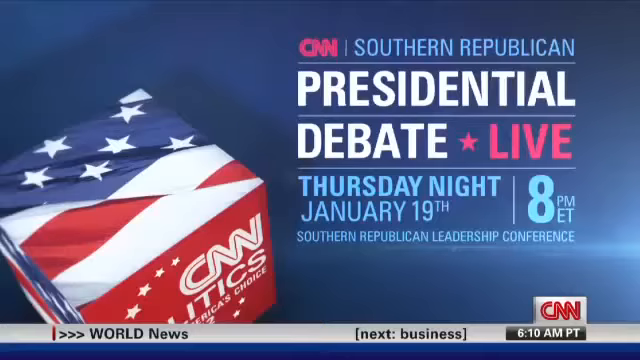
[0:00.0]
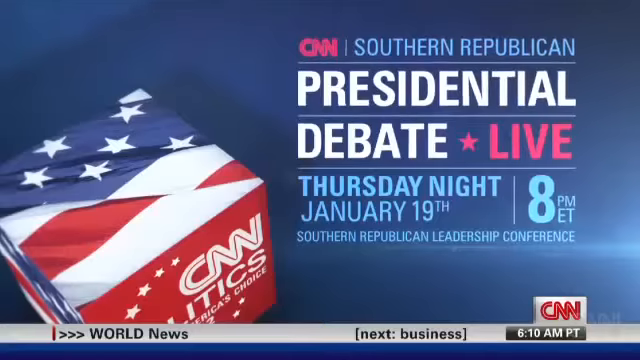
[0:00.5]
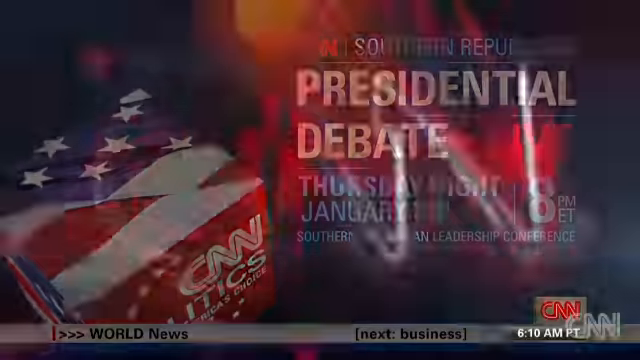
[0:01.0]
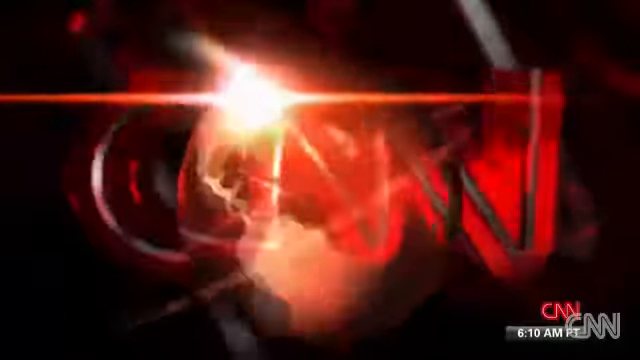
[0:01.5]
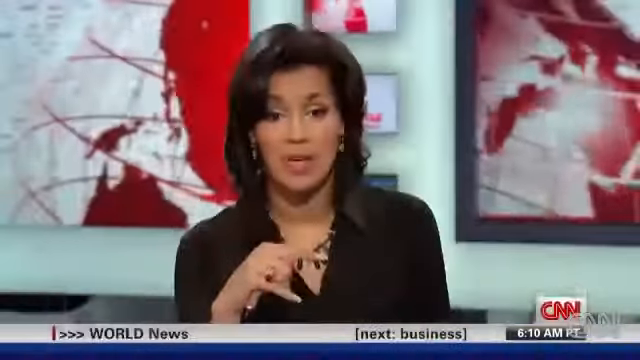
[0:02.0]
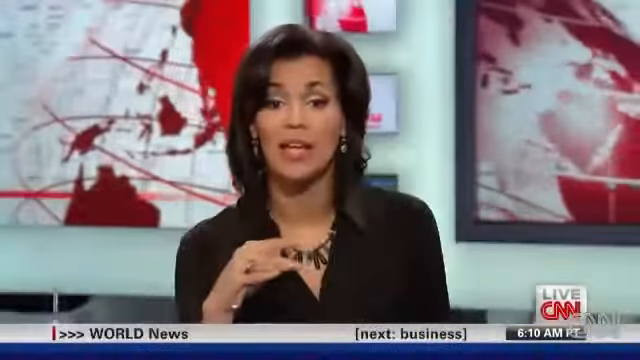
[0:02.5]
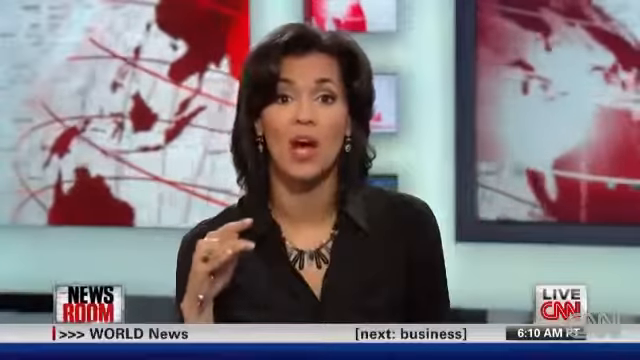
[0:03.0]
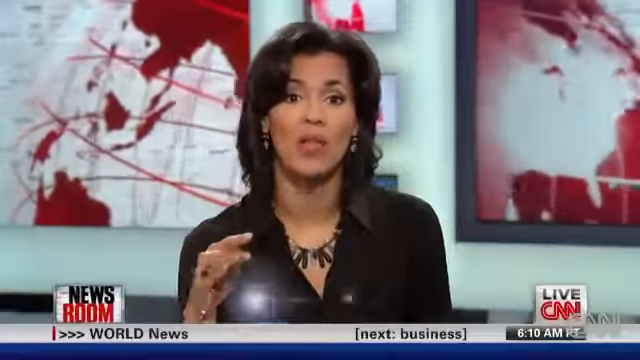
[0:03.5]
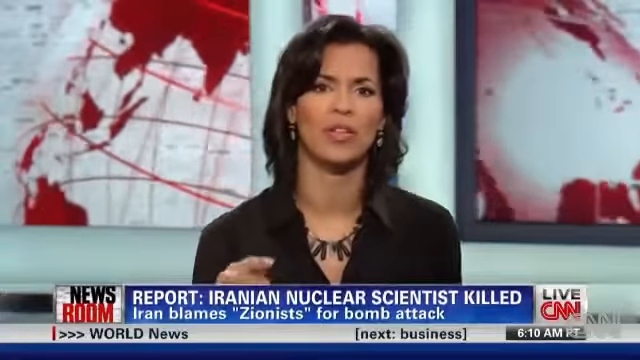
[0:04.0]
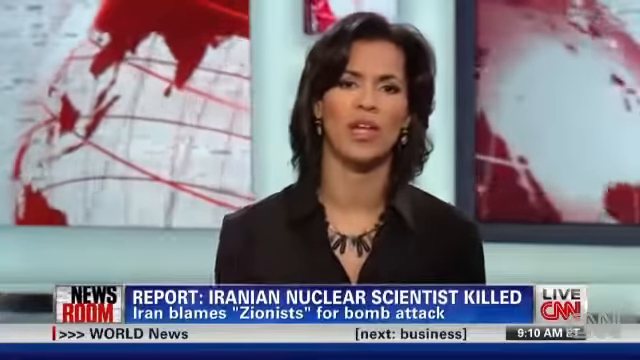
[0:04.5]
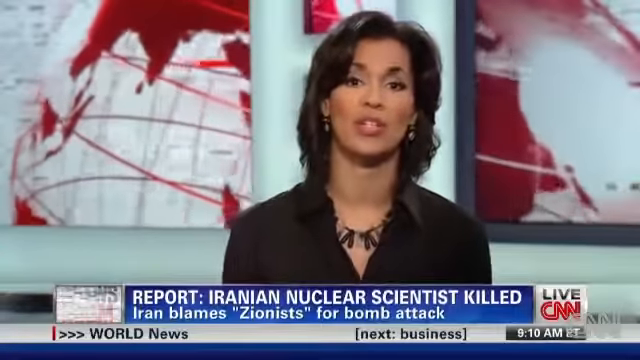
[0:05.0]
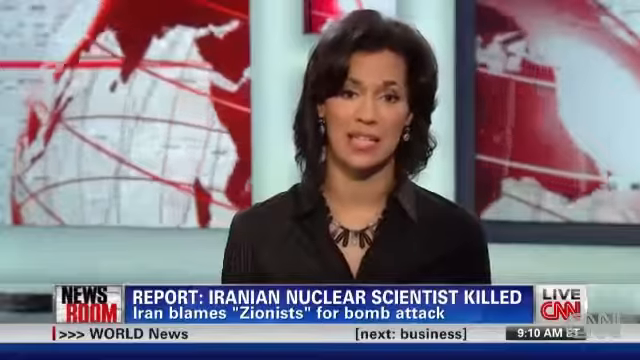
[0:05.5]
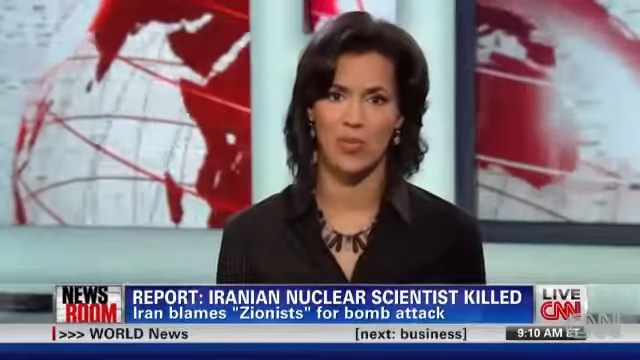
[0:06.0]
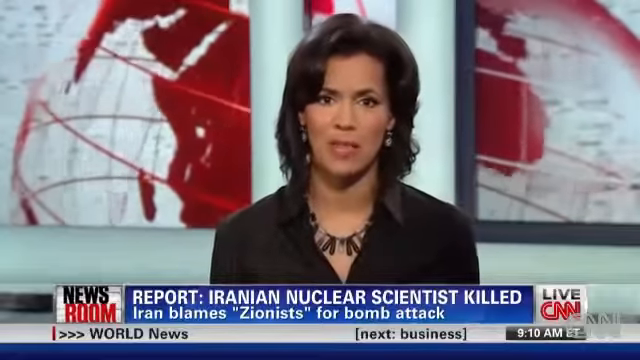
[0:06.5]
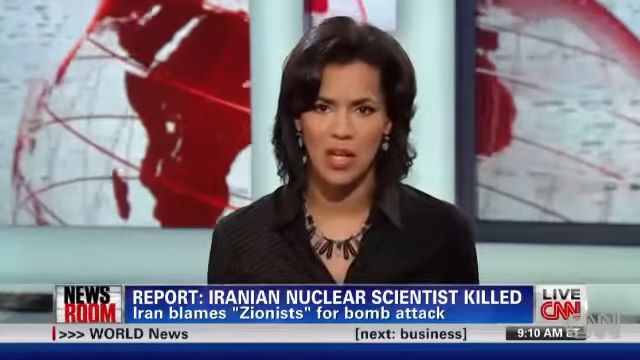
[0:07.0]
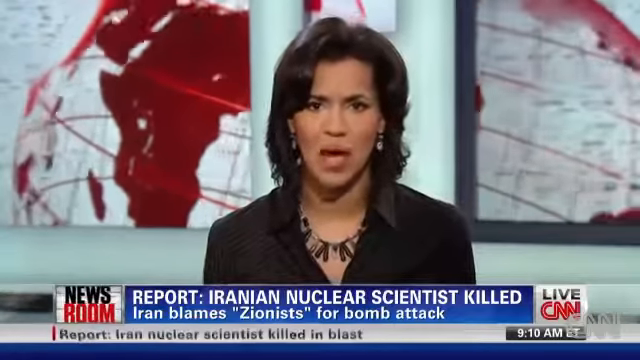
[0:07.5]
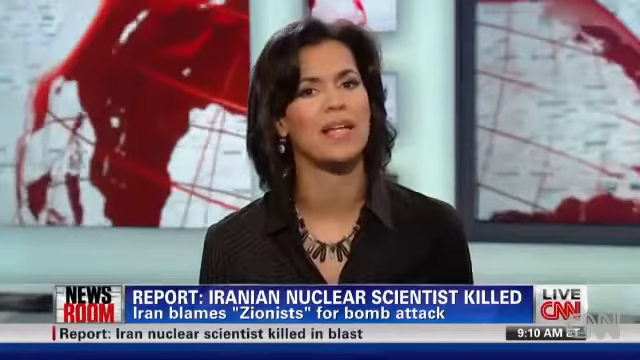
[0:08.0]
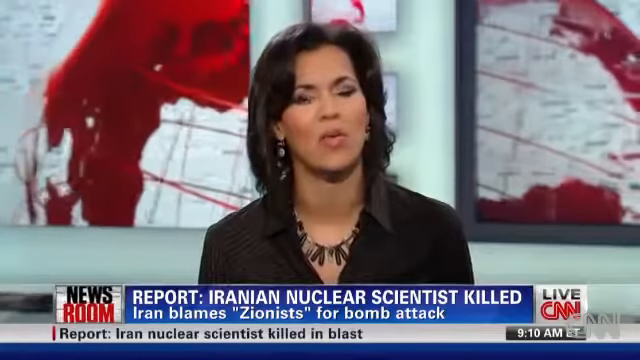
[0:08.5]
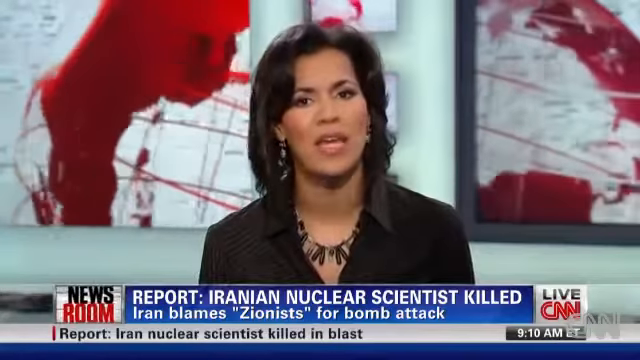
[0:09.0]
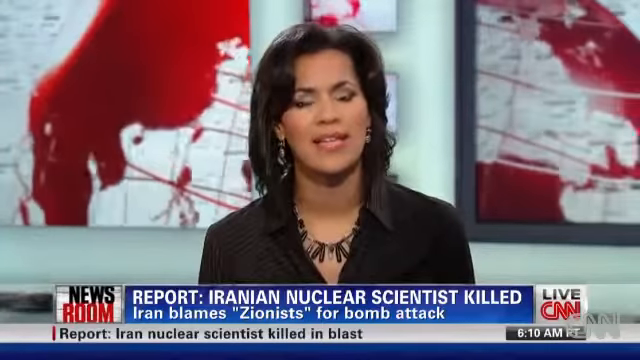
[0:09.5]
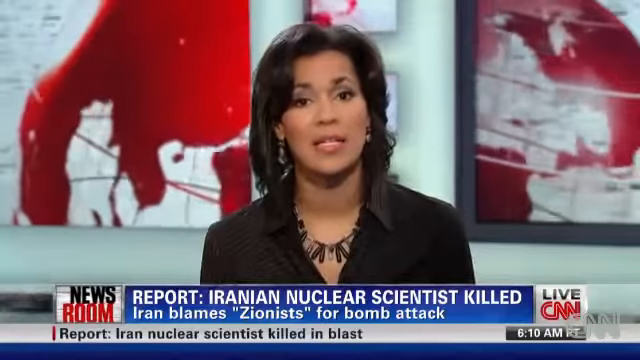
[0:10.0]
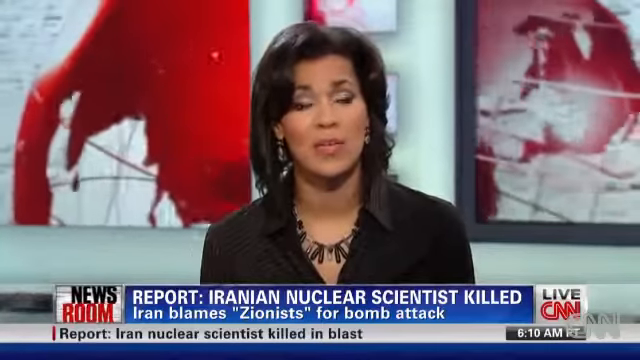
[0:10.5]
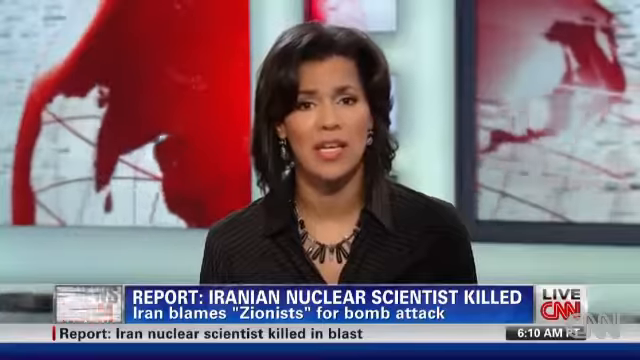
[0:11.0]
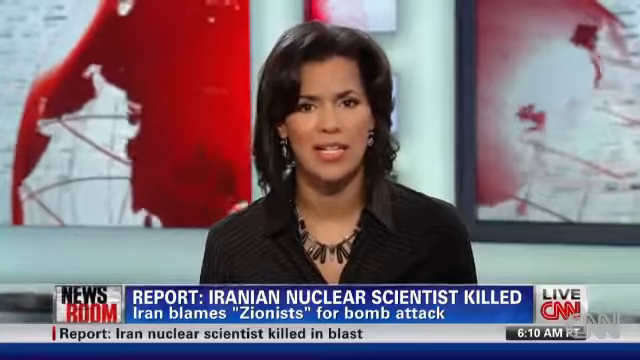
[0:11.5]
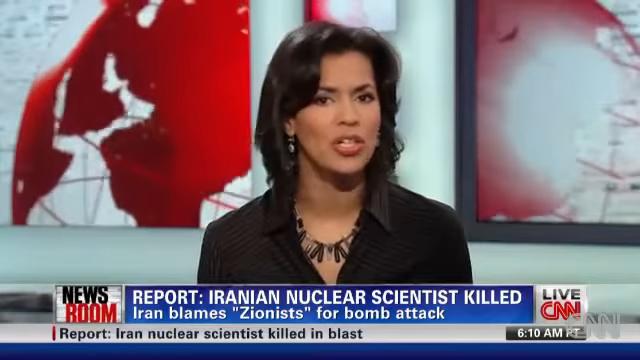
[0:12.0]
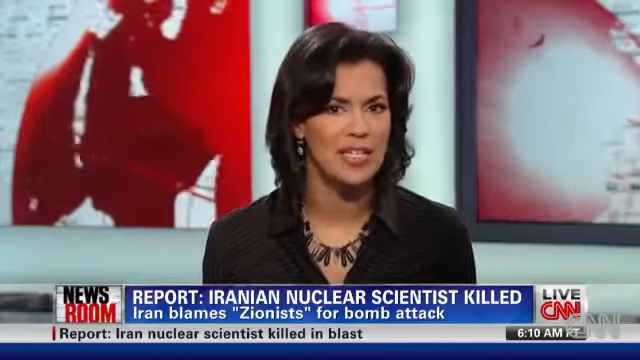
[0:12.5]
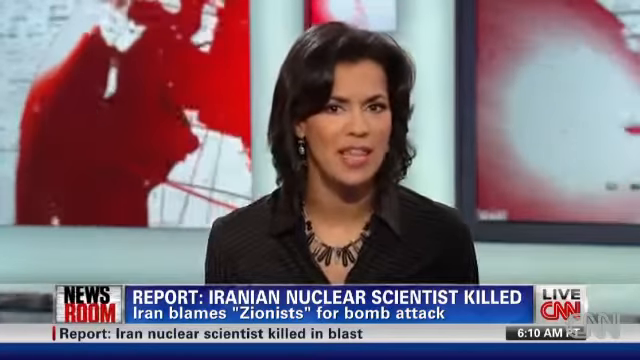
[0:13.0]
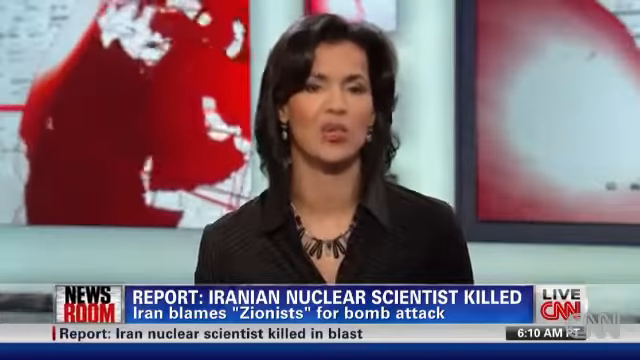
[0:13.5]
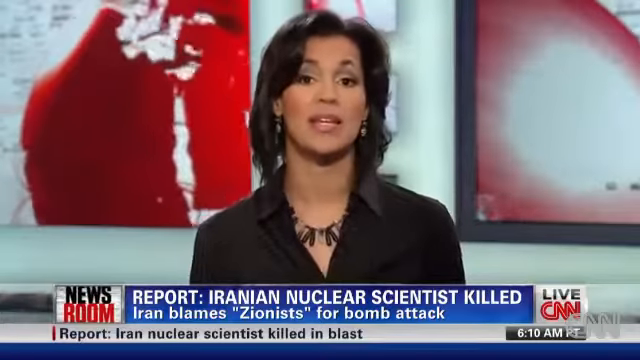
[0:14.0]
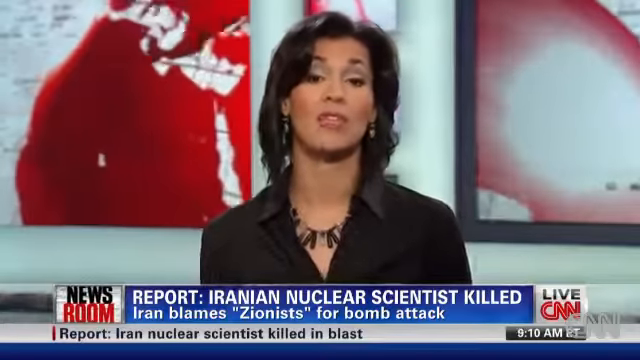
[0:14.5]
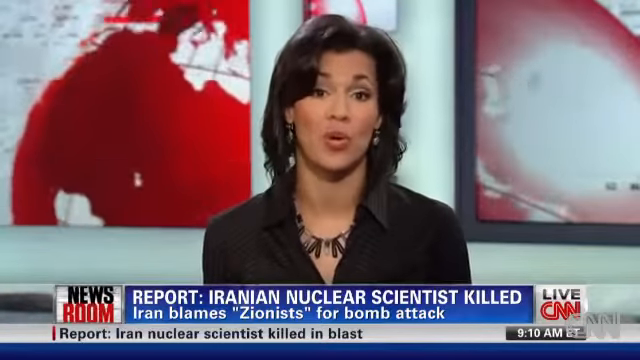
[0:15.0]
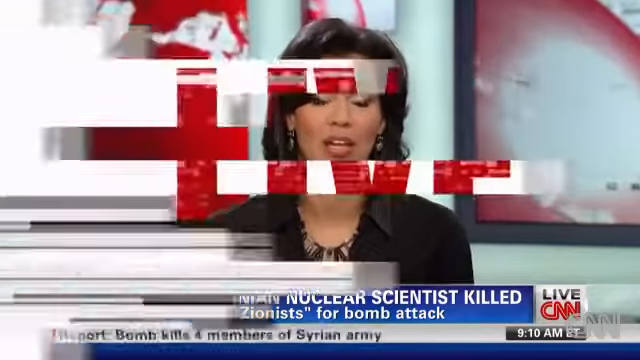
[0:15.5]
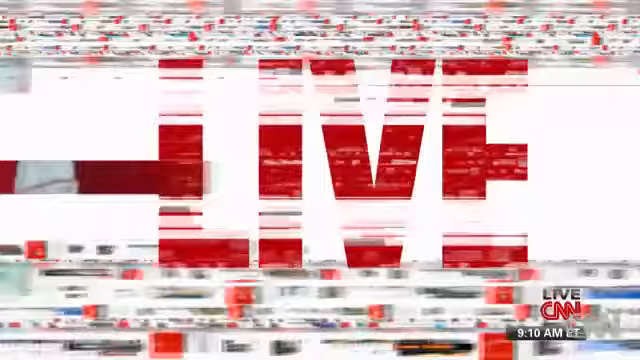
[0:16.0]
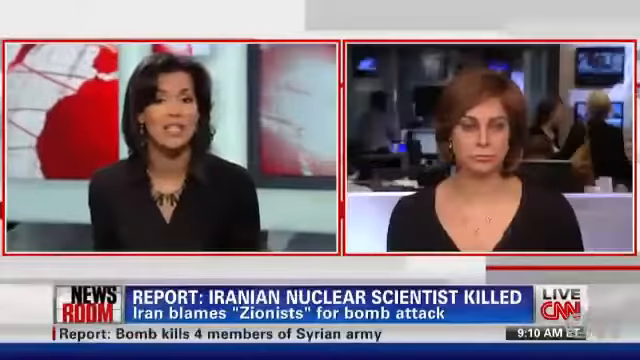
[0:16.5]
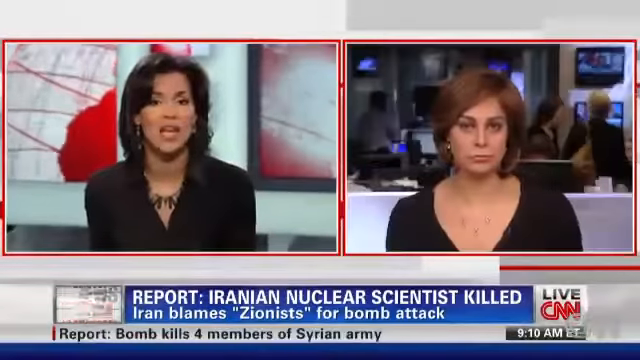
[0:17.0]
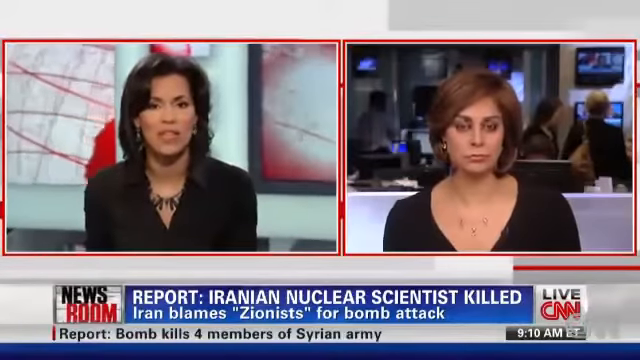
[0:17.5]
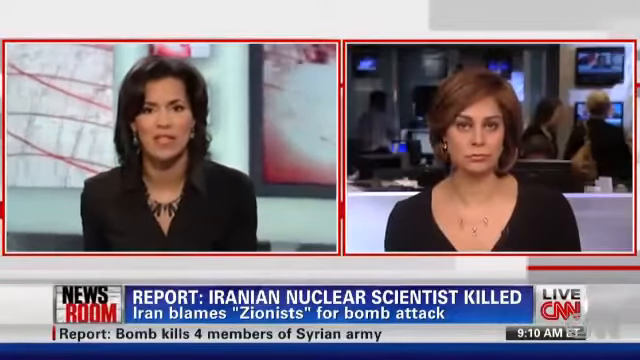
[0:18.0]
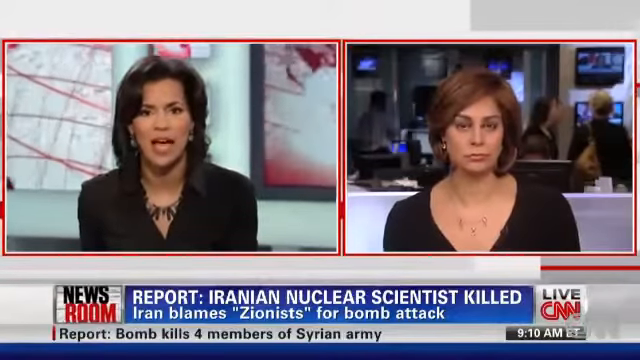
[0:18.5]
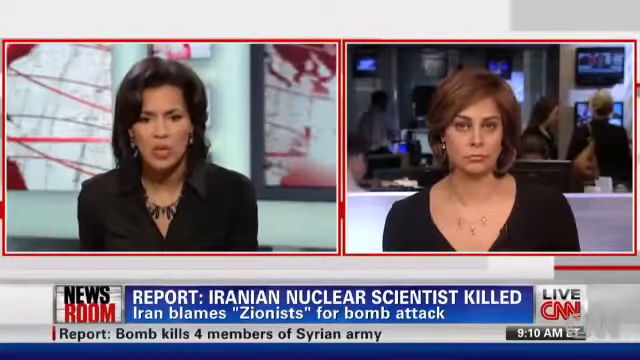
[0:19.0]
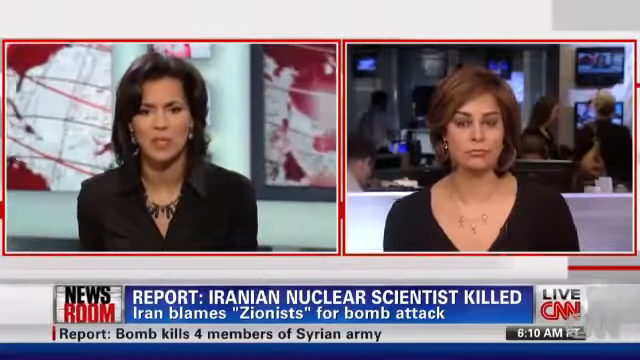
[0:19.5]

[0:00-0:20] A short opening sequence plays first. A heading then appears that seems to be about a Southern Republic presidential debate, with the text "Thursday night, January 19th at 8 p.m., Southern Republican Leadership Conference" written in block letters. A woman appears who seems to be the journalist reading the news on a channel called CNN. She wears a black shirt and earrings, has beautiful hair, and wears makeup with a light natural colour on her lips. The news heading reads "Iranian nuclear scientist killed". A "LIVE" label appears, and then another woman appears on the side.